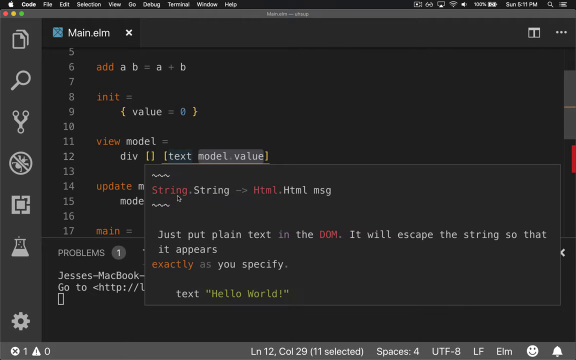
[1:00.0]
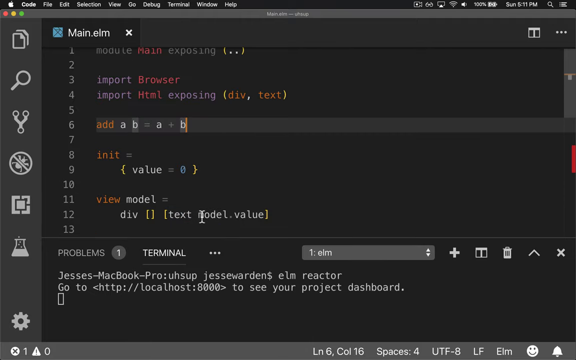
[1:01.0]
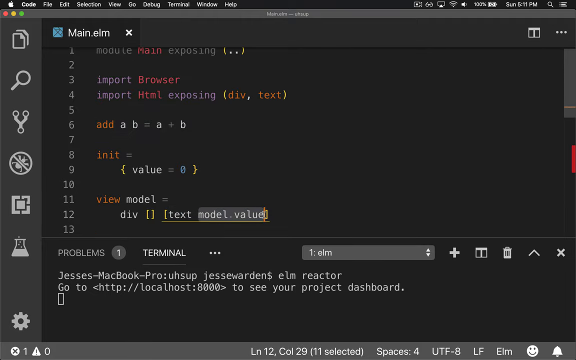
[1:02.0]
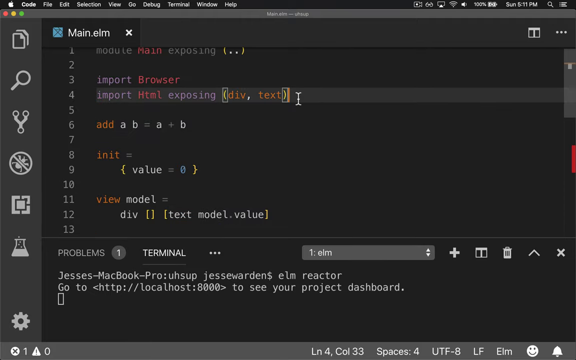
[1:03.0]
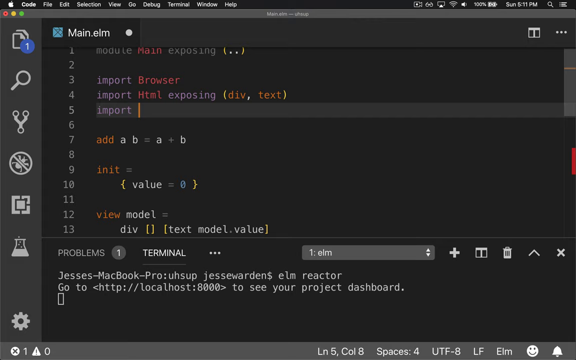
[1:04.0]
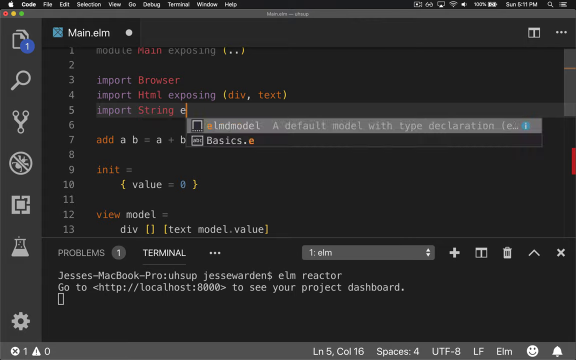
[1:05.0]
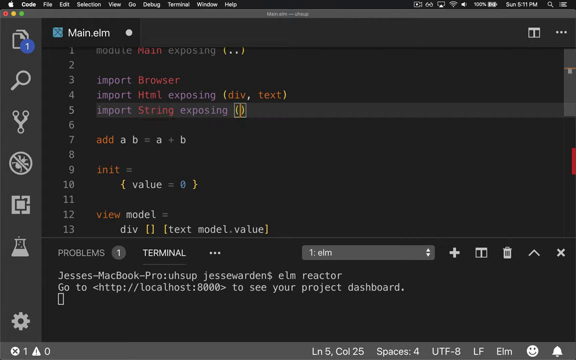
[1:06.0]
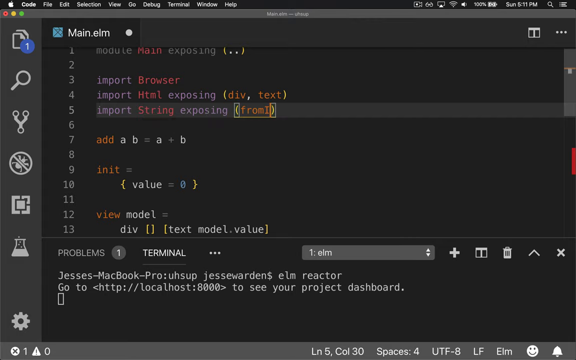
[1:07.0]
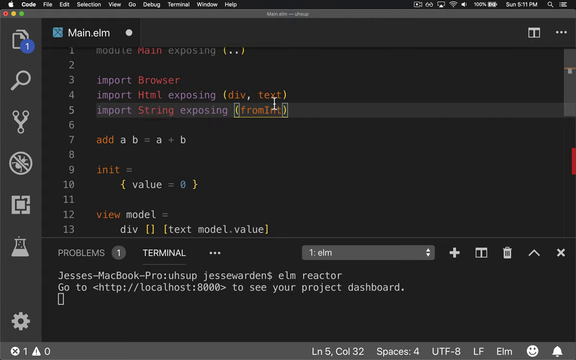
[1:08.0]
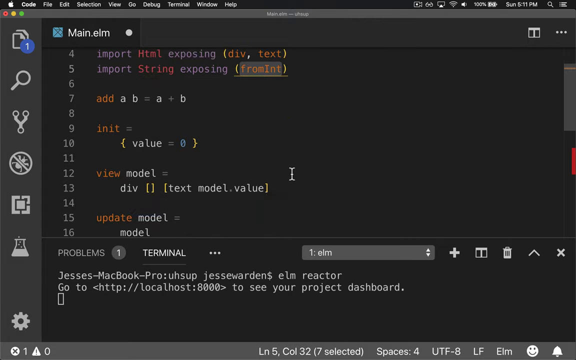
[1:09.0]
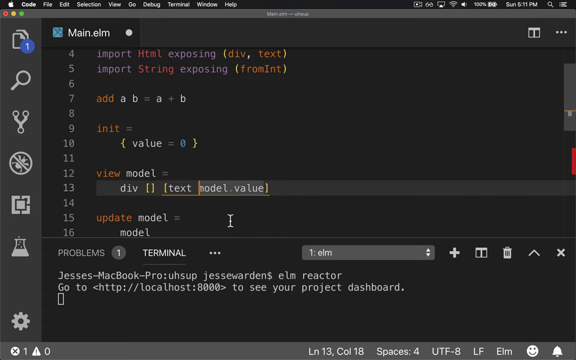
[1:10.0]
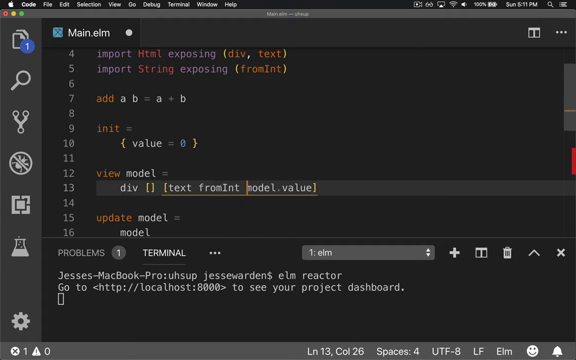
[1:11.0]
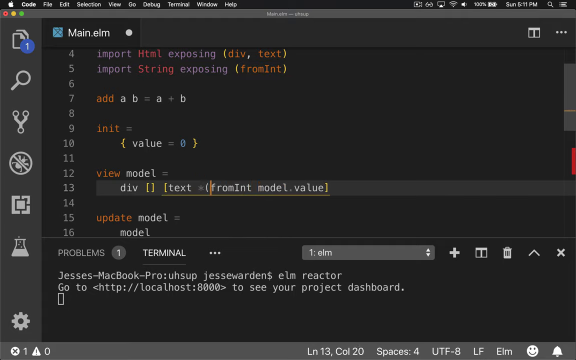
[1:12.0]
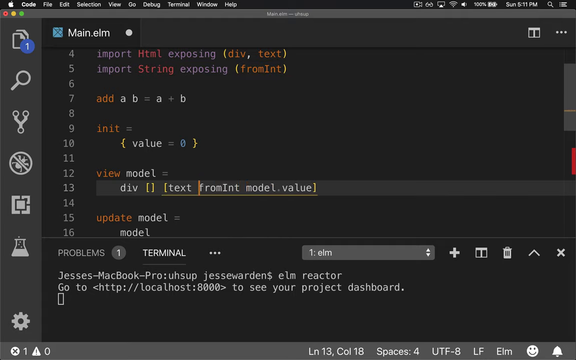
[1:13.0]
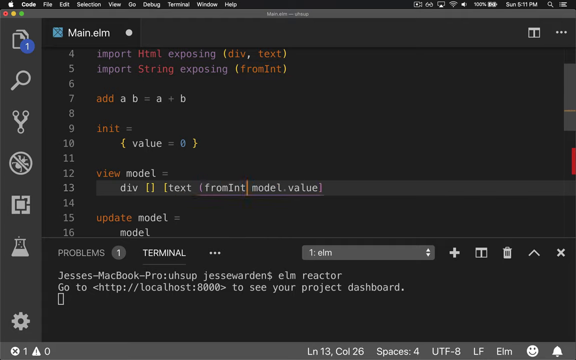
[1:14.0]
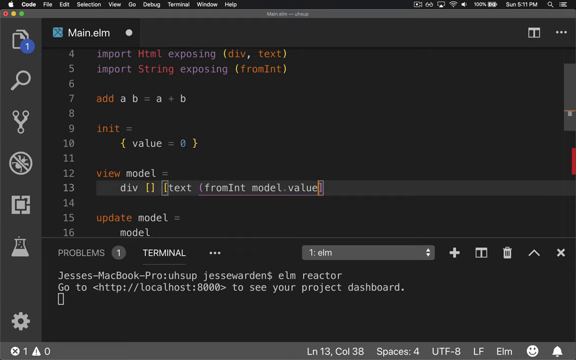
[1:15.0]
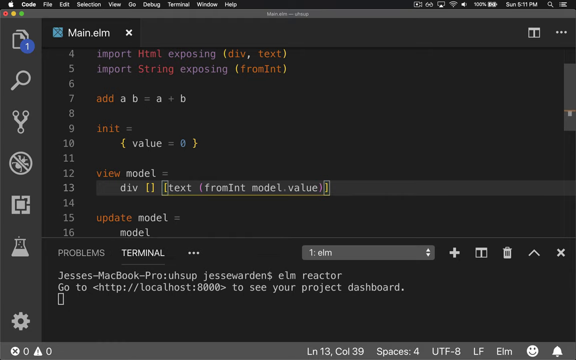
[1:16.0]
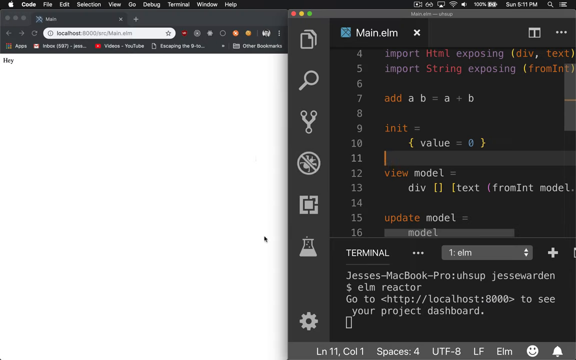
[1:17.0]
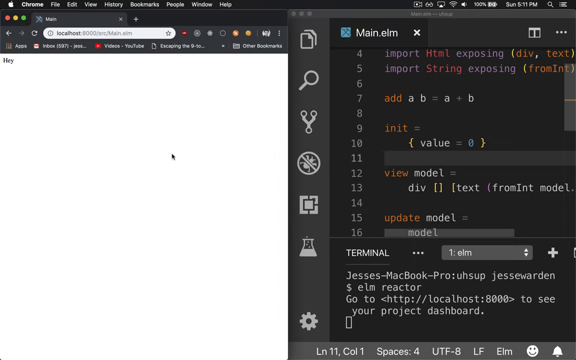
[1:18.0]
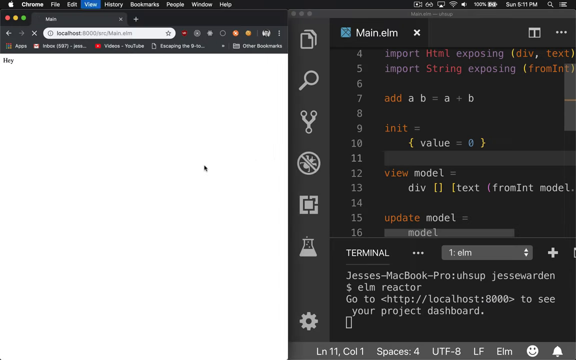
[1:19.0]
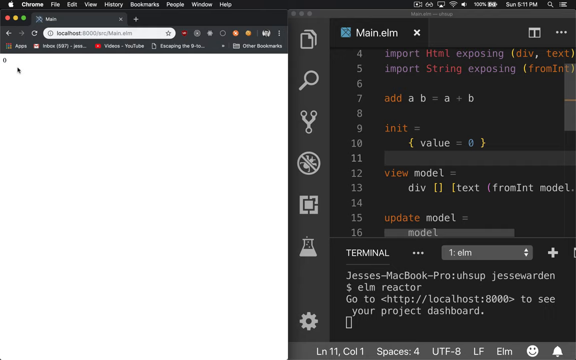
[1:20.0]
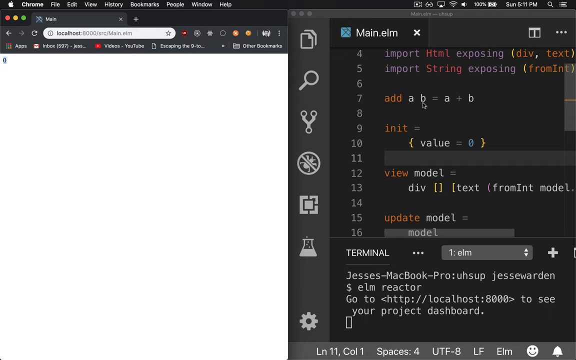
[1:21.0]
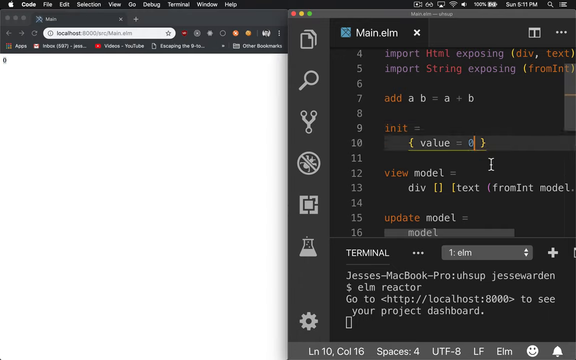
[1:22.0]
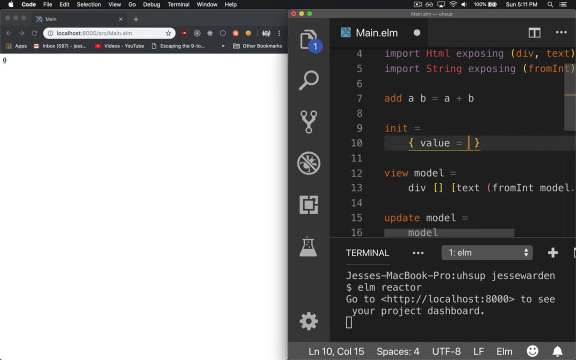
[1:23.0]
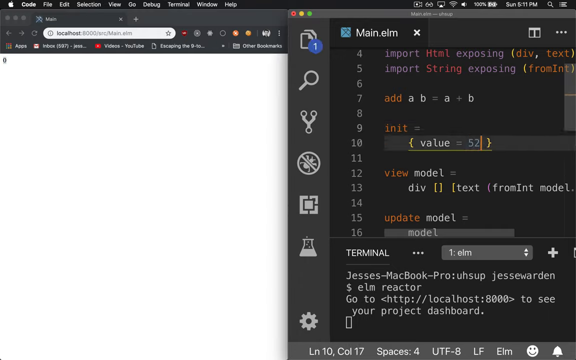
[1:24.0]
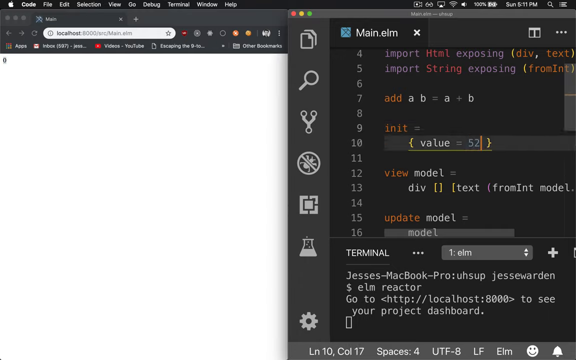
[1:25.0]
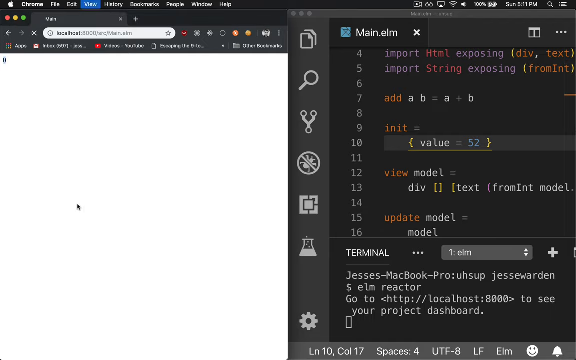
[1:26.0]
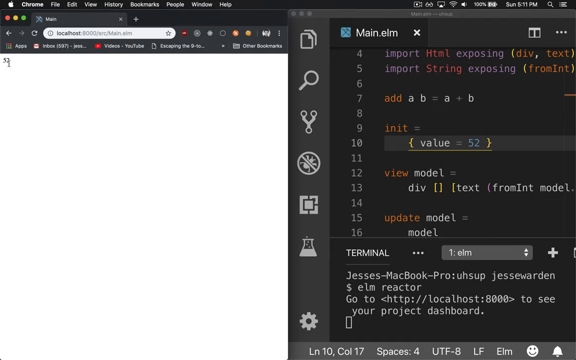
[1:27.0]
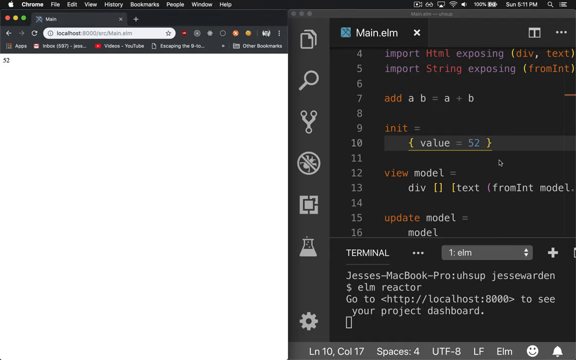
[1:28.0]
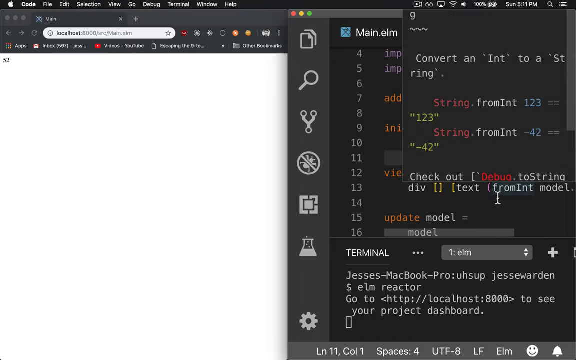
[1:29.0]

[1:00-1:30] The screen recording continues on macOS, showing a main.elm model. The person shows model.value and adds a new import at the top of the main.elm file: after import browser and import html exposing div and text, they import string exposing from int. They then use text equals from int model.value. They initialize an int value of 52, and the int value can be seen being initialized inside the Elm model as well. No physical subjects appear; the setting is the IDE on the main.elm file.